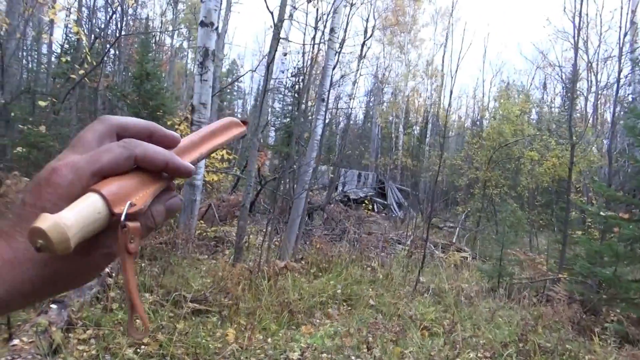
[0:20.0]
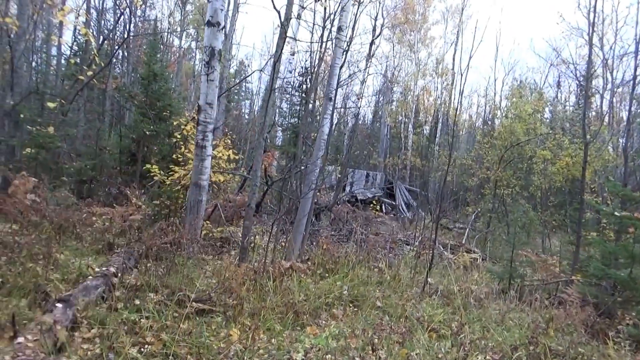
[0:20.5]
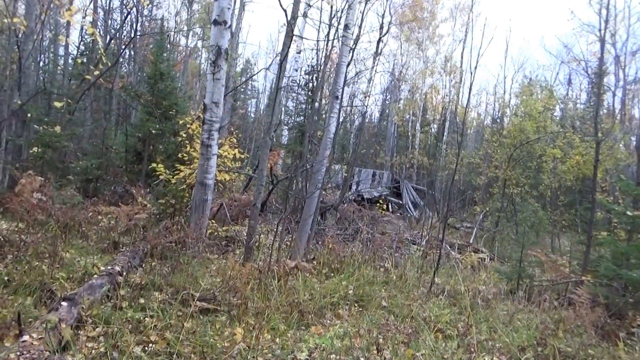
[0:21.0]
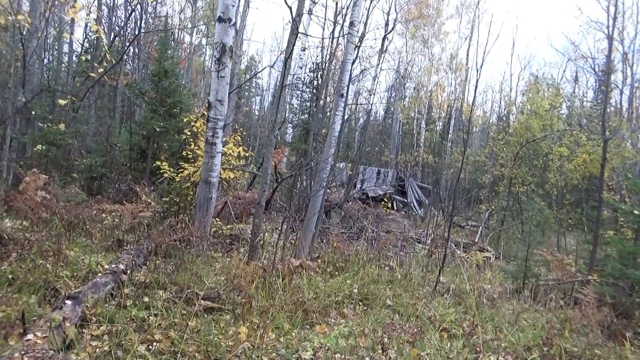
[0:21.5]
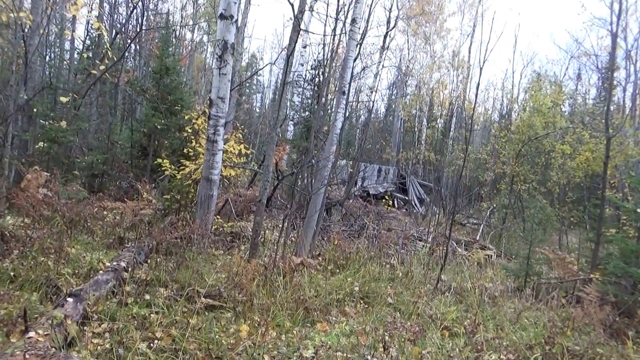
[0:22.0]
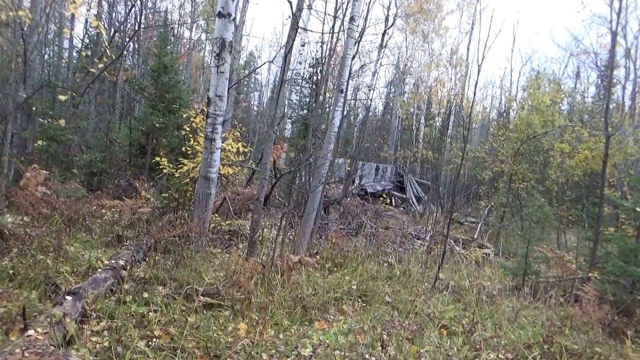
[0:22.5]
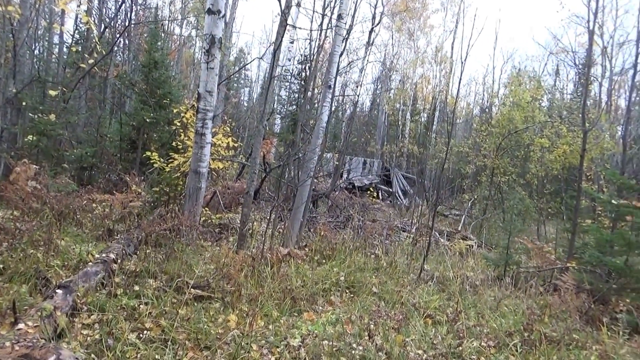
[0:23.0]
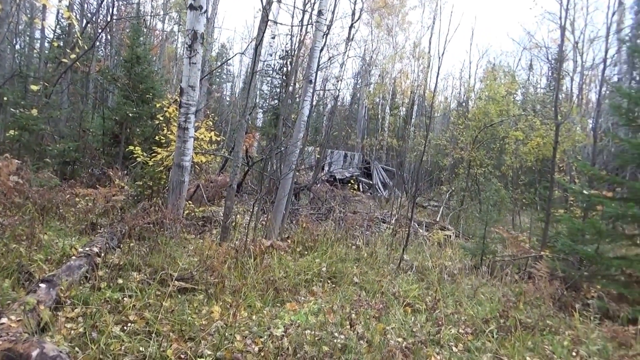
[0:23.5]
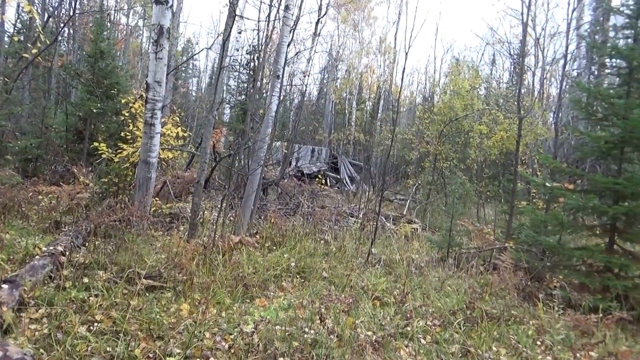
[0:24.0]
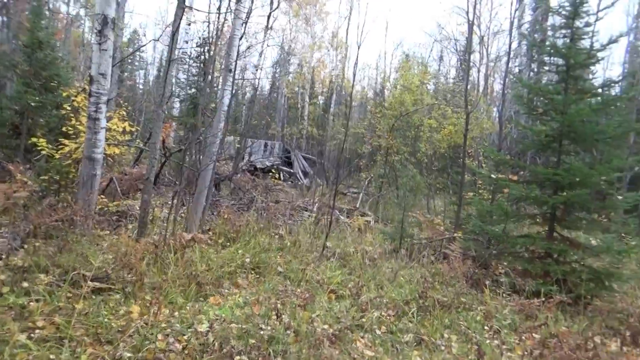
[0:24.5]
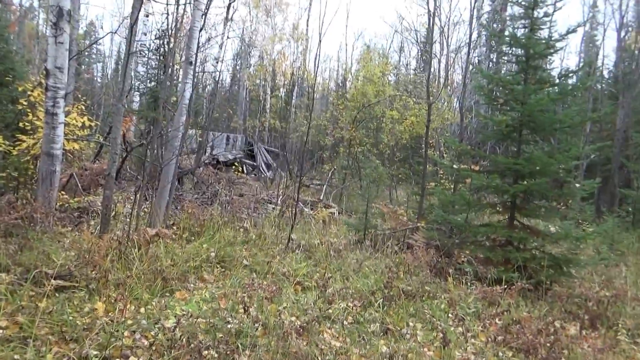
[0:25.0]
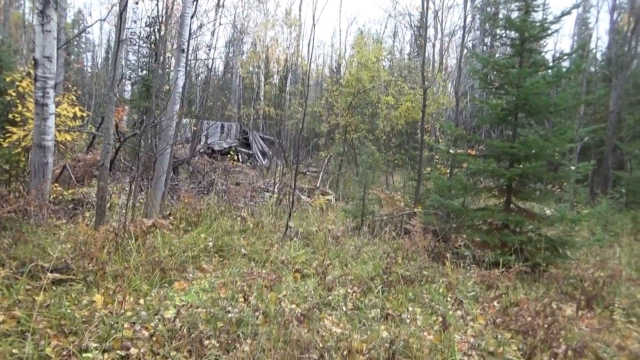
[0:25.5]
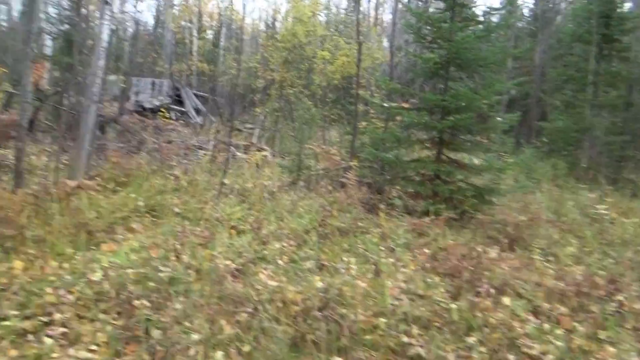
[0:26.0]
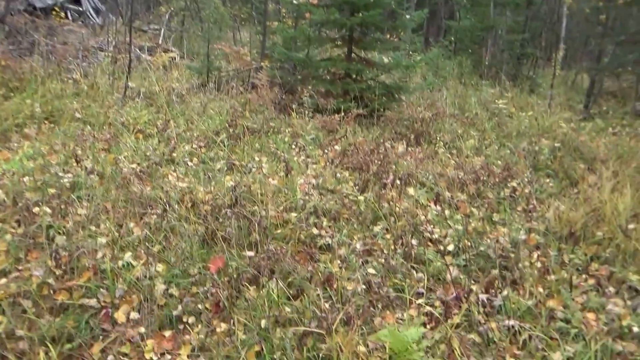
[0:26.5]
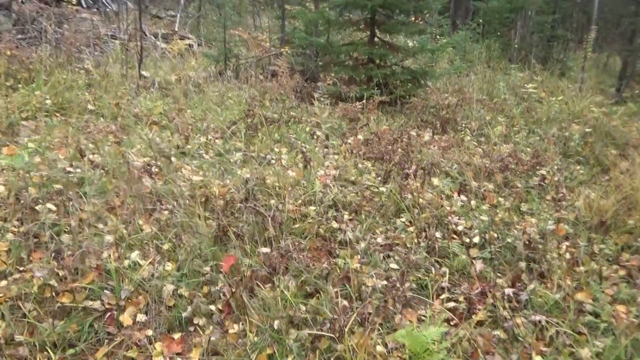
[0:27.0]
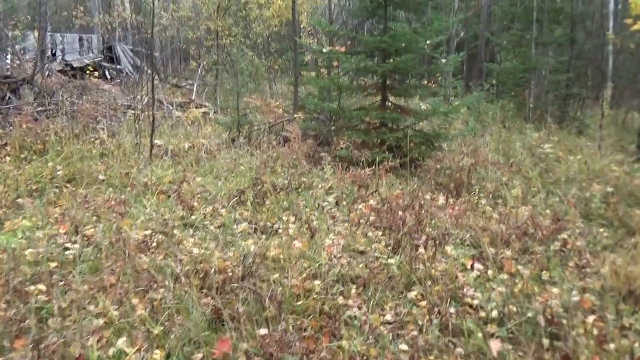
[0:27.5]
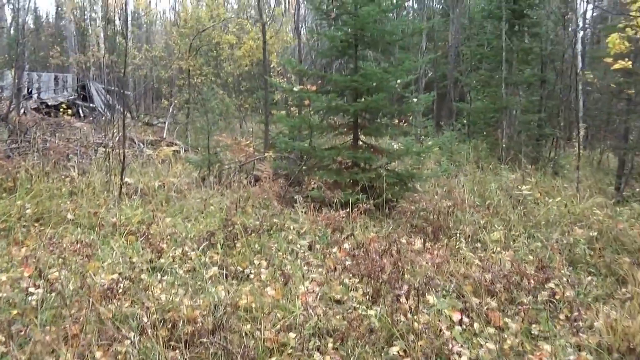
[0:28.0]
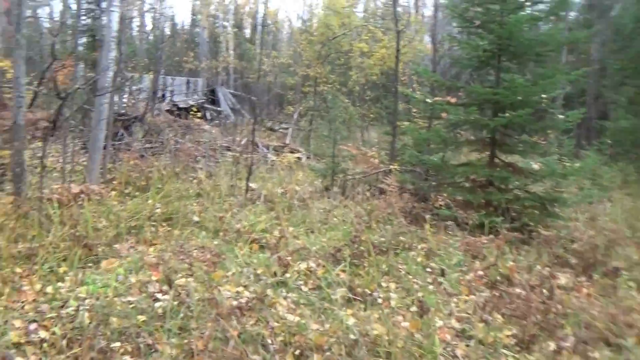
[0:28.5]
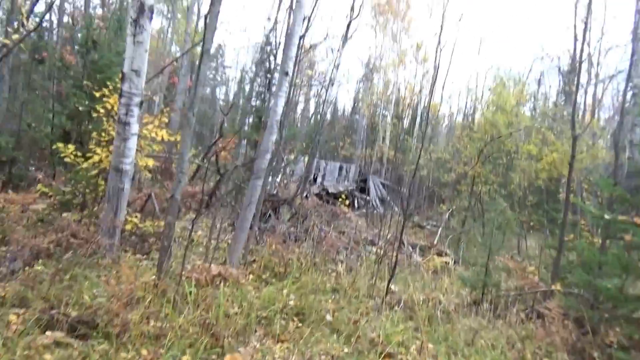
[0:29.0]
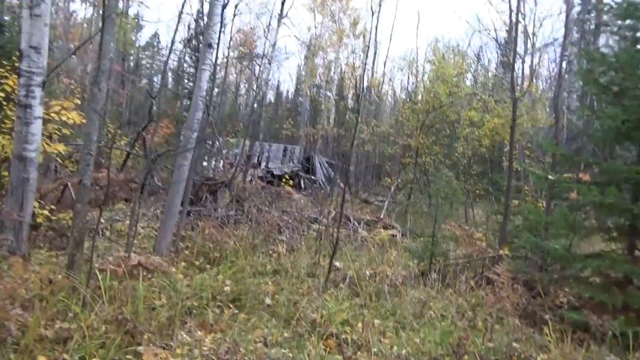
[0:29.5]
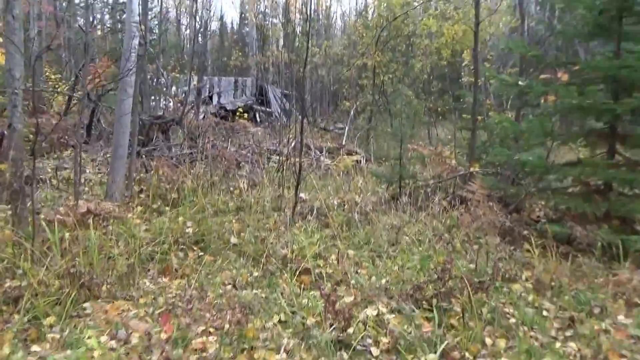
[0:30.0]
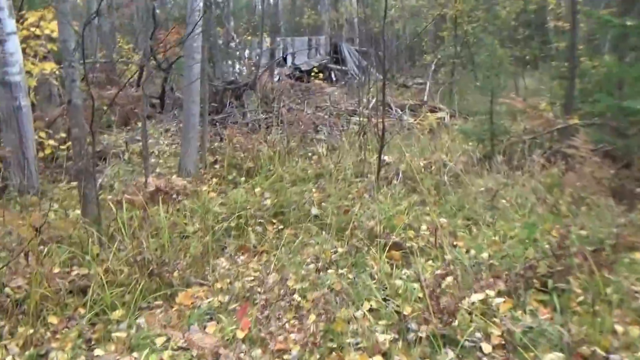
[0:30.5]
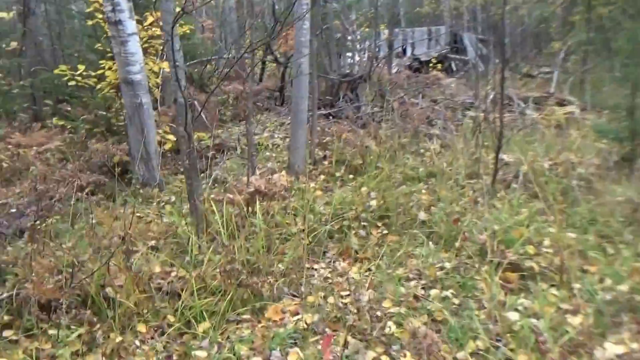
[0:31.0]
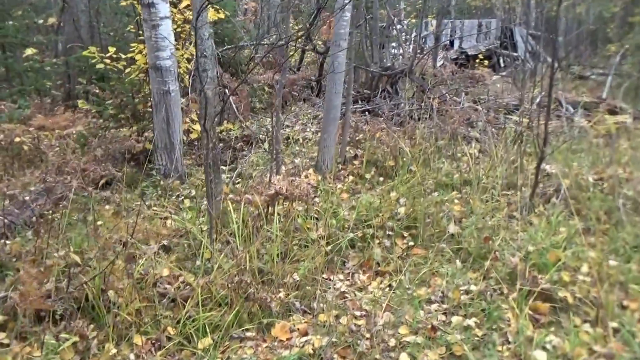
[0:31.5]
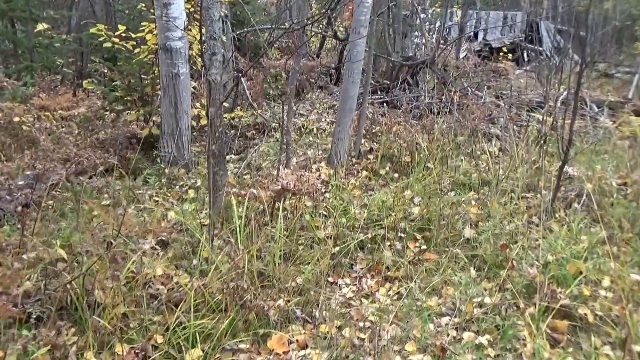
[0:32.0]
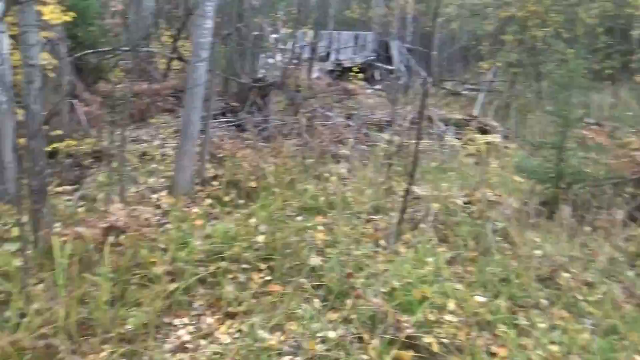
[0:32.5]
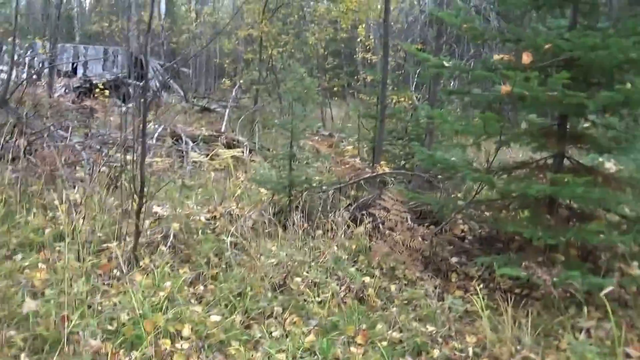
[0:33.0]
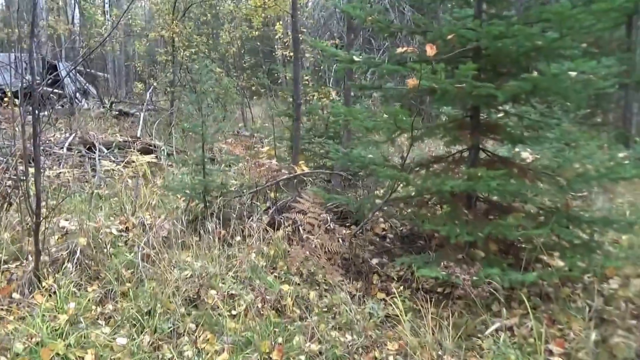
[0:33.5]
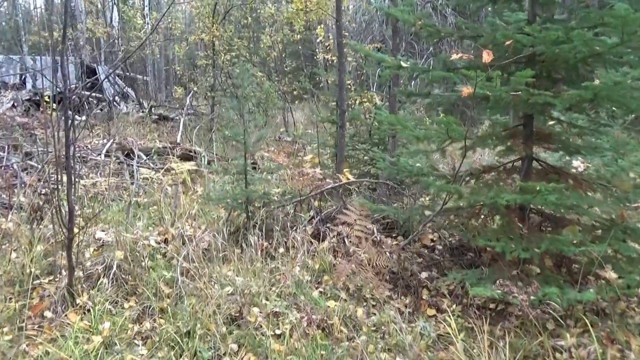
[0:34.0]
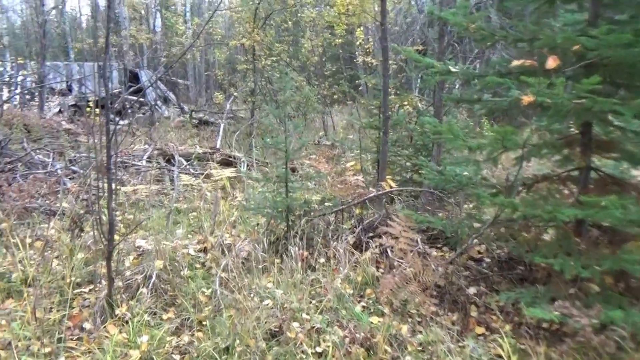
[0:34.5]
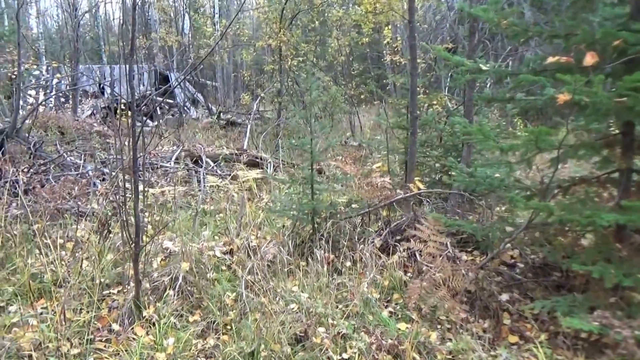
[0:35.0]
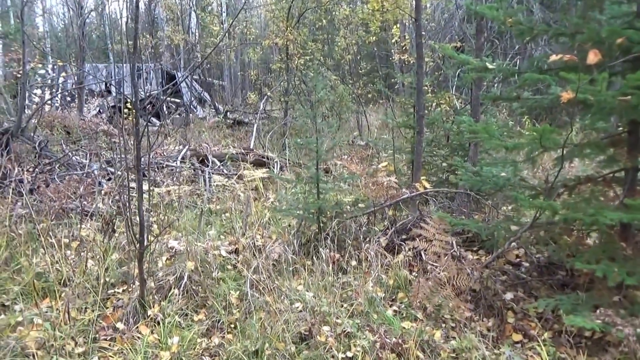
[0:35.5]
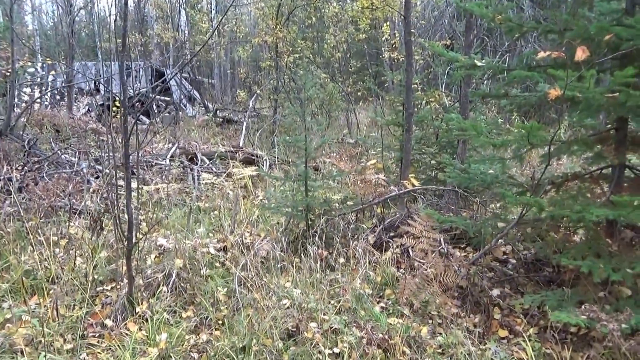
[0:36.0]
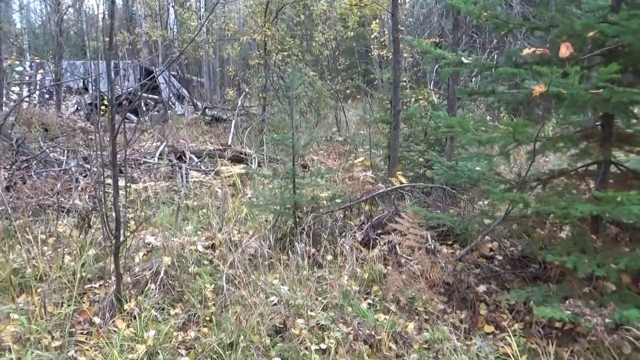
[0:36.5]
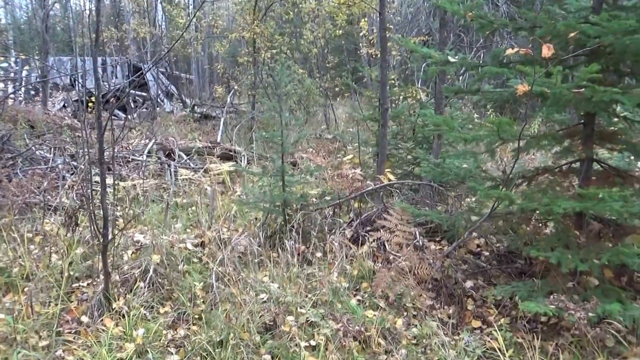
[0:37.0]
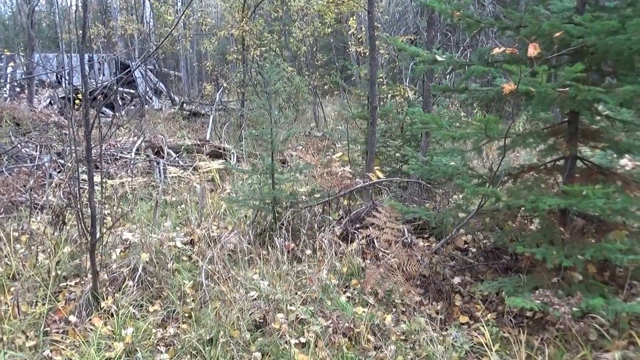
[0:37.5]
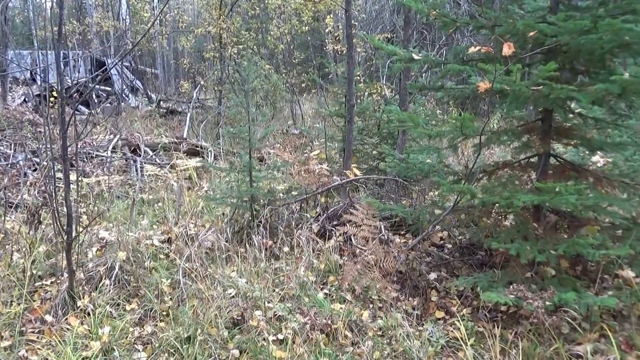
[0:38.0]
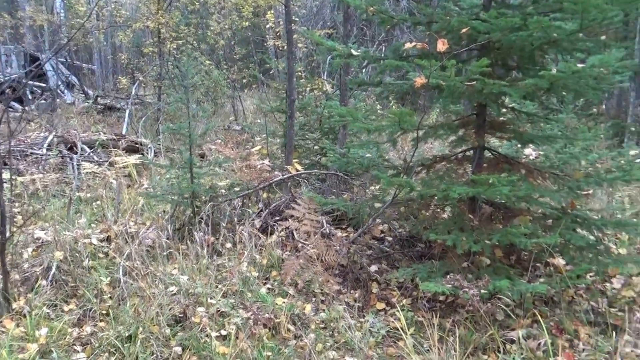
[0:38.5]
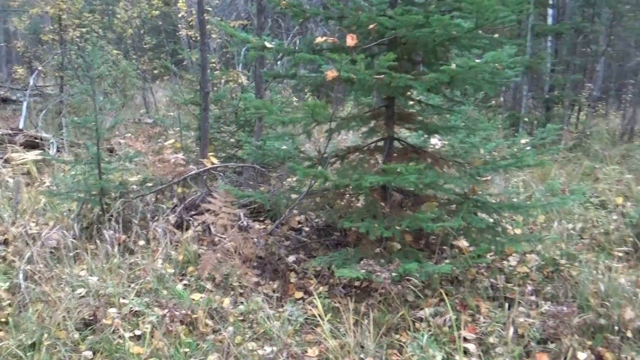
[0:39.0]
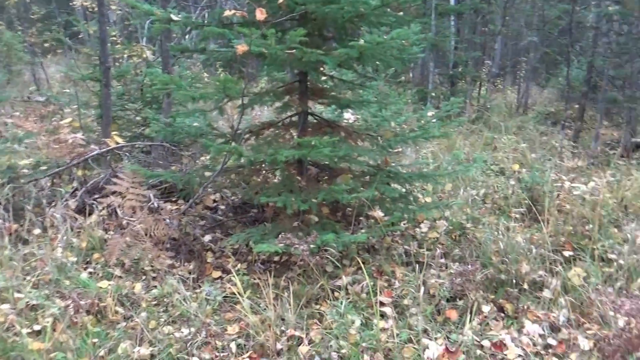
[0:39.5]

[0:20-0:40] The person's left hand is raised, pointing towards something in the distance that looks like a collapsed wooden building or some tree trunks. The camera pans down to the grass at the bottom of the view, moves up again, and continues moving slightly left and right as the person walks forward, then stops and rests on the right-hand side of a tree. There are lots of tree trunks and thin branches, as well as some green grass and many bits of brown leaves on the ground. It is daytime and the sky is visible. The setting is a forested area, seen from inside a clearing; in the background there appears to be a wooden roof of a building, partially broken or open on the right-hand side, though it is not very clear.